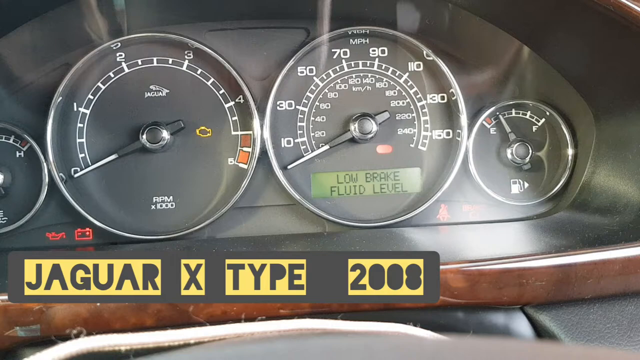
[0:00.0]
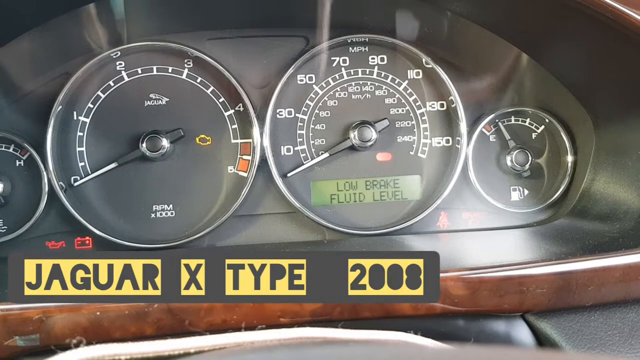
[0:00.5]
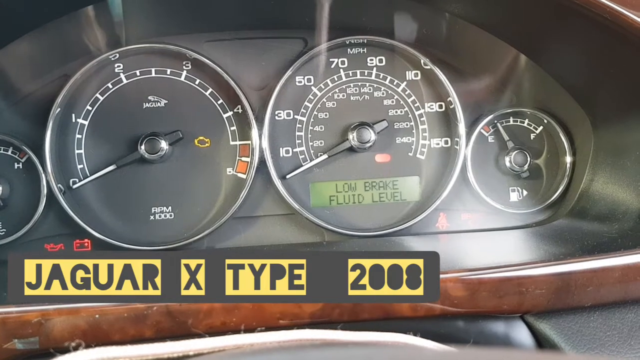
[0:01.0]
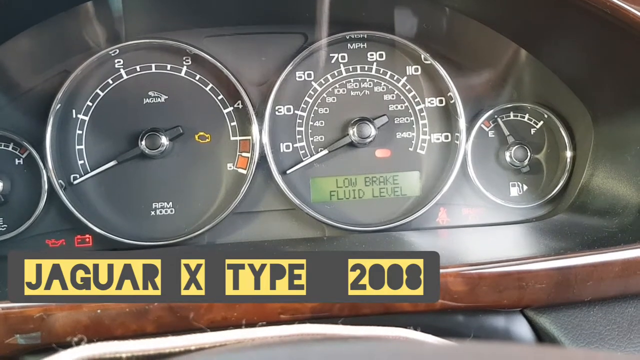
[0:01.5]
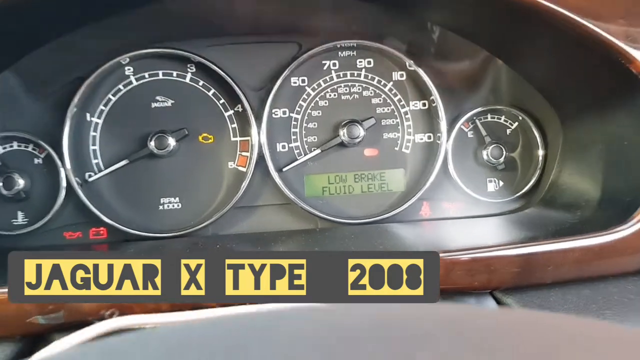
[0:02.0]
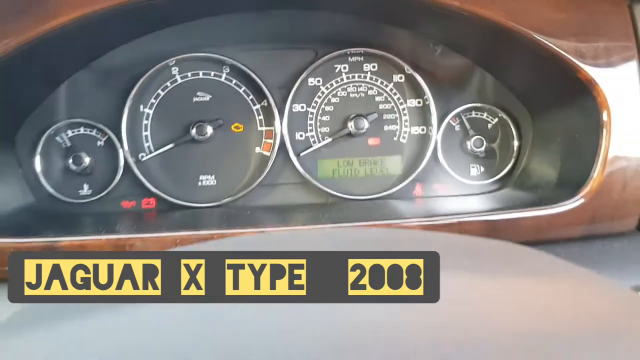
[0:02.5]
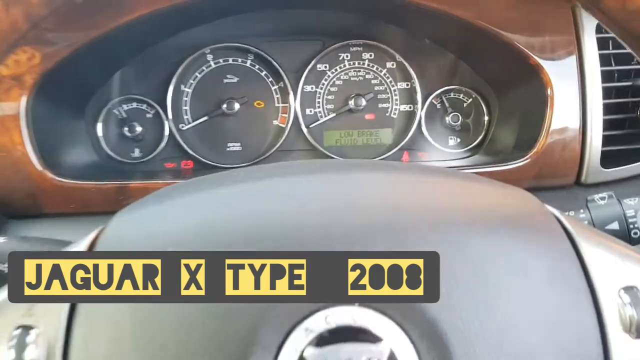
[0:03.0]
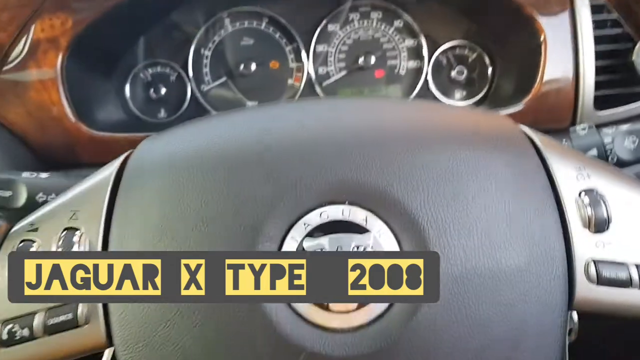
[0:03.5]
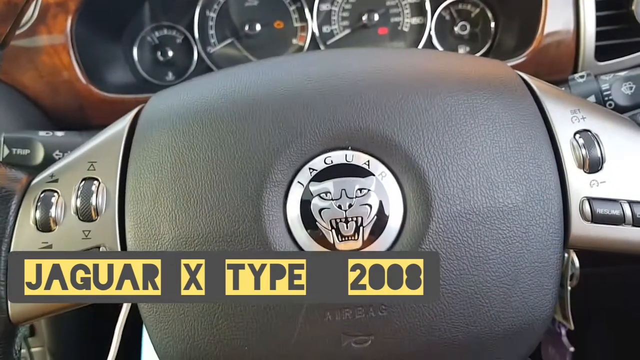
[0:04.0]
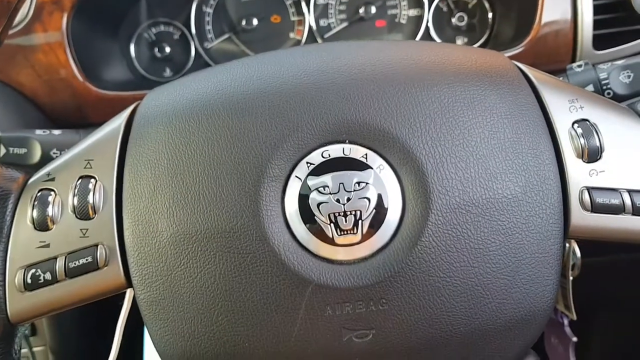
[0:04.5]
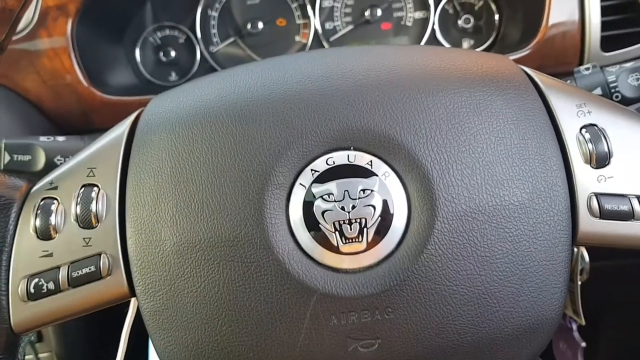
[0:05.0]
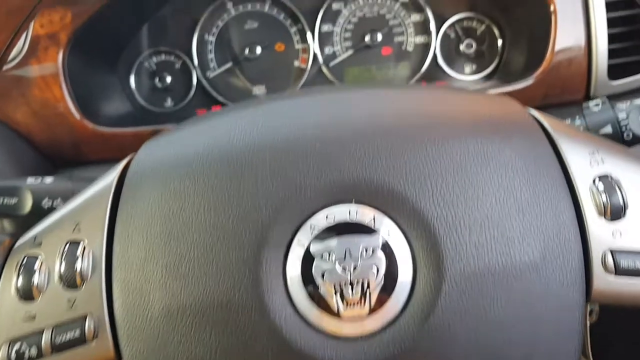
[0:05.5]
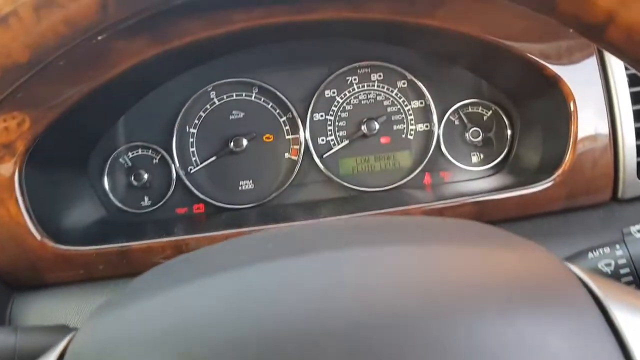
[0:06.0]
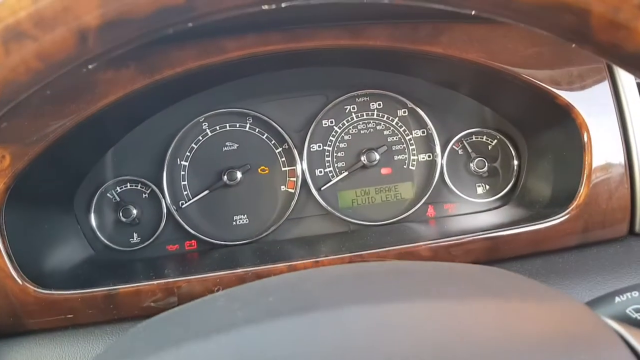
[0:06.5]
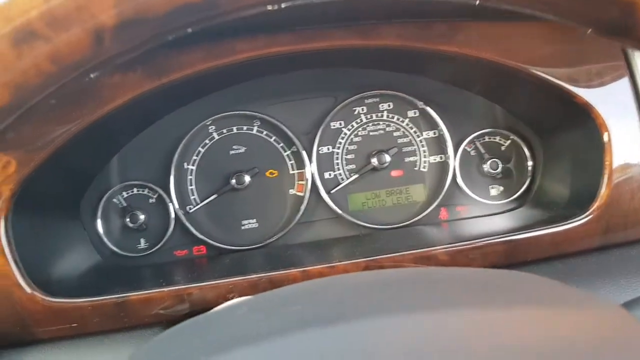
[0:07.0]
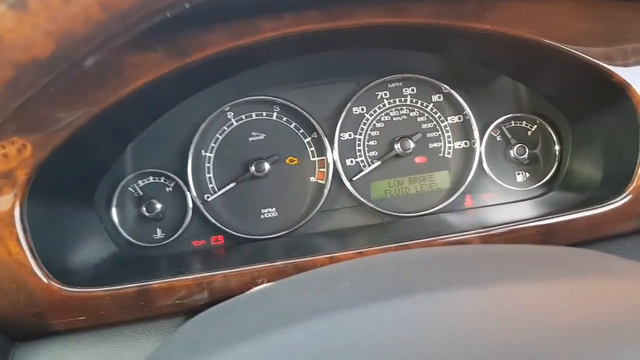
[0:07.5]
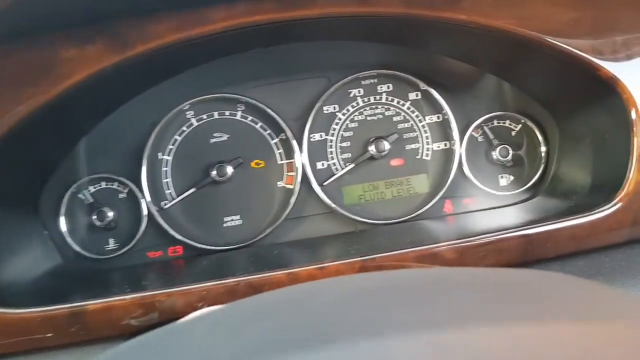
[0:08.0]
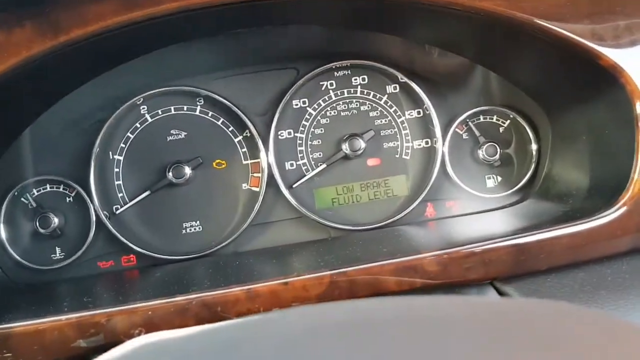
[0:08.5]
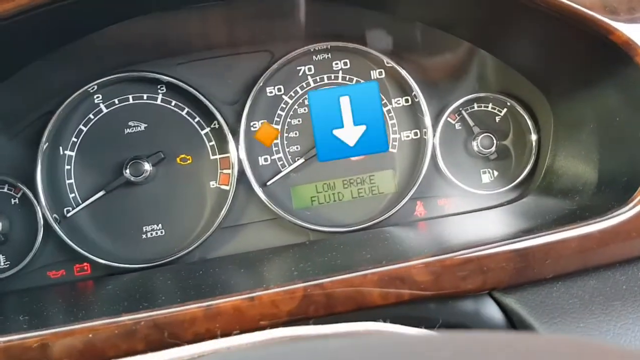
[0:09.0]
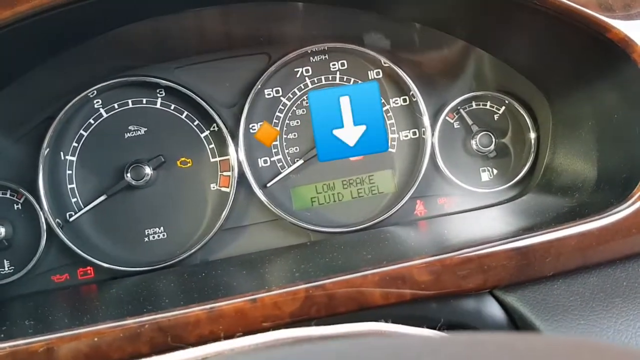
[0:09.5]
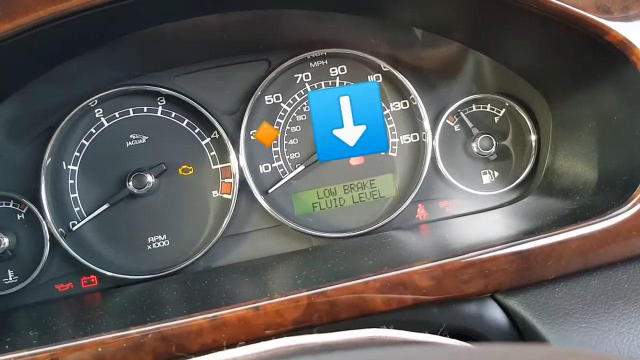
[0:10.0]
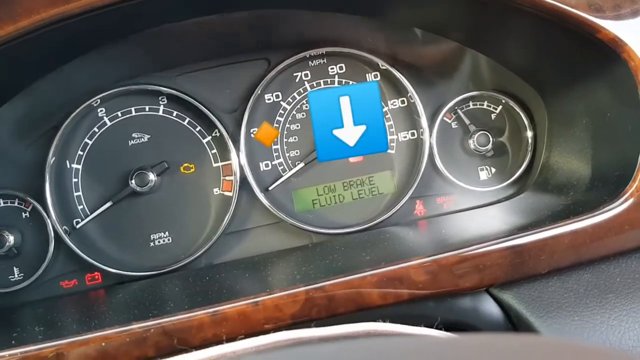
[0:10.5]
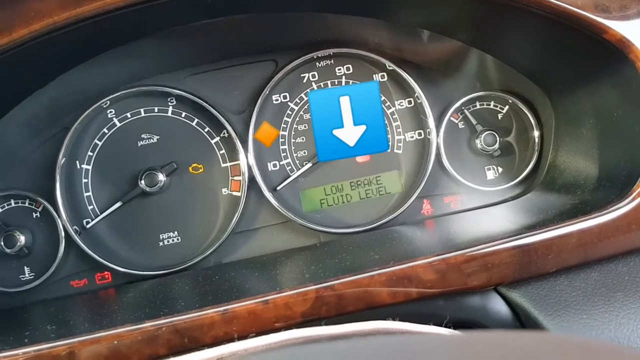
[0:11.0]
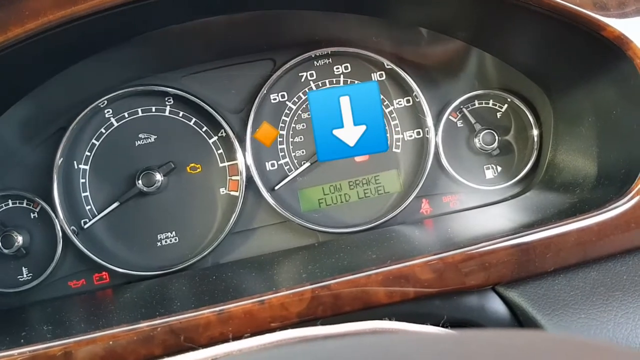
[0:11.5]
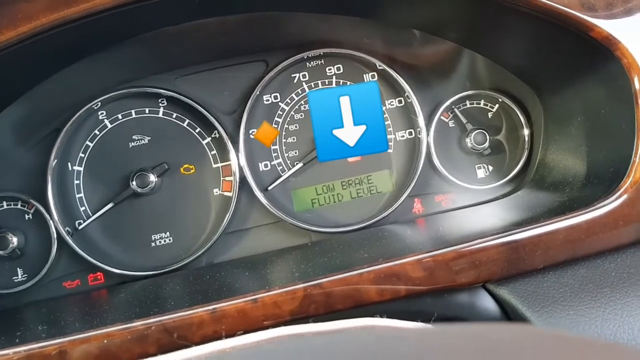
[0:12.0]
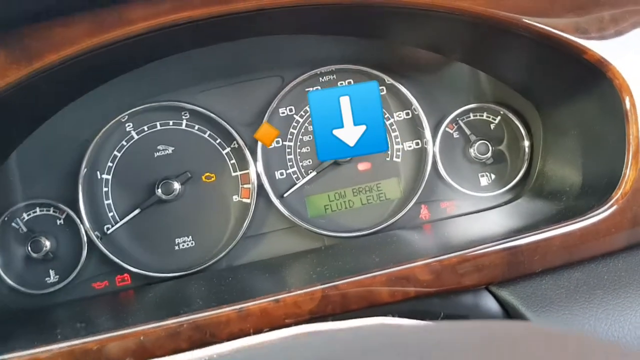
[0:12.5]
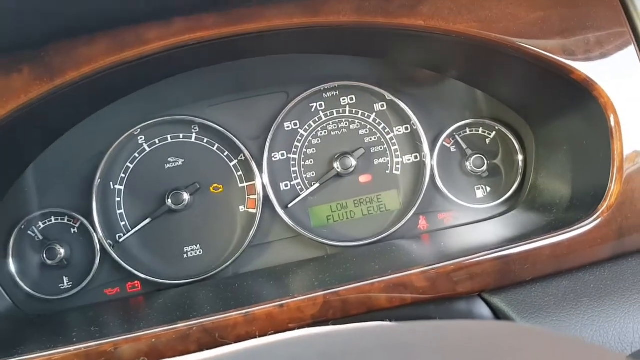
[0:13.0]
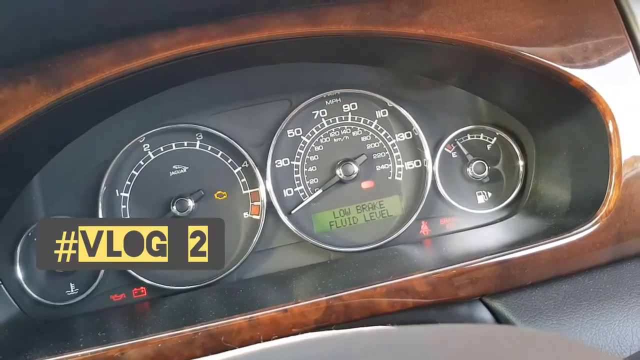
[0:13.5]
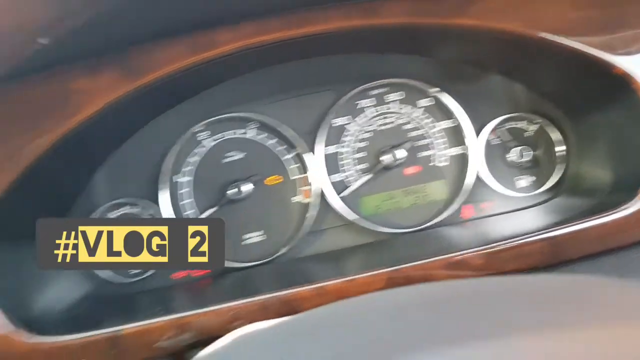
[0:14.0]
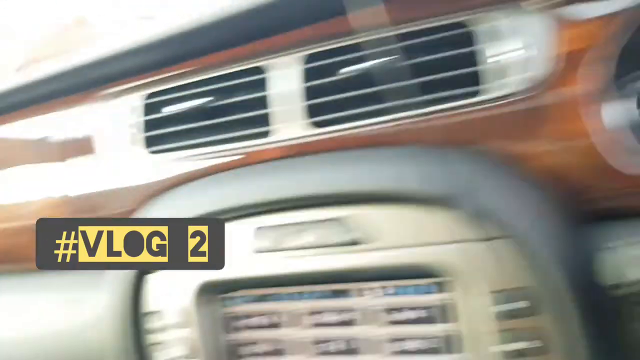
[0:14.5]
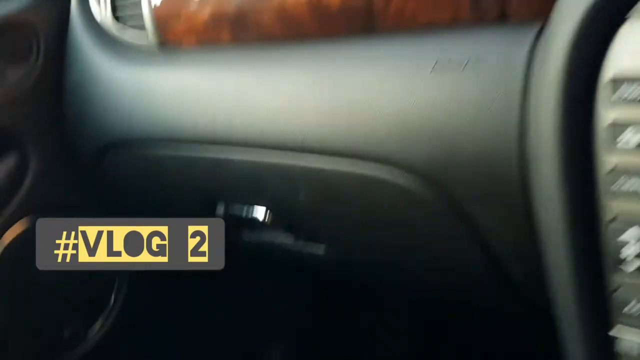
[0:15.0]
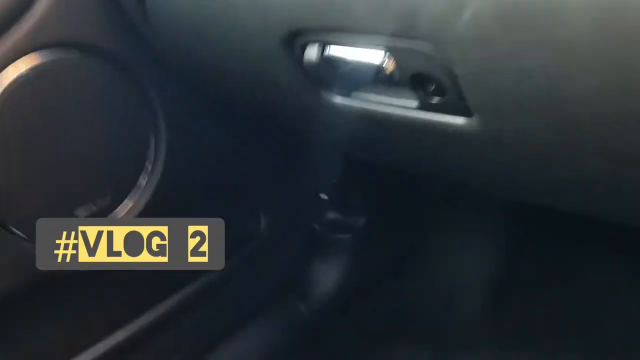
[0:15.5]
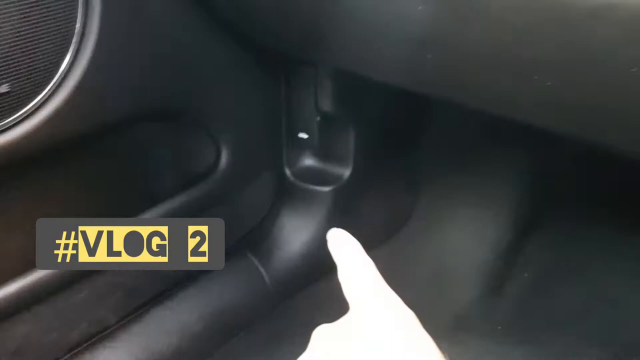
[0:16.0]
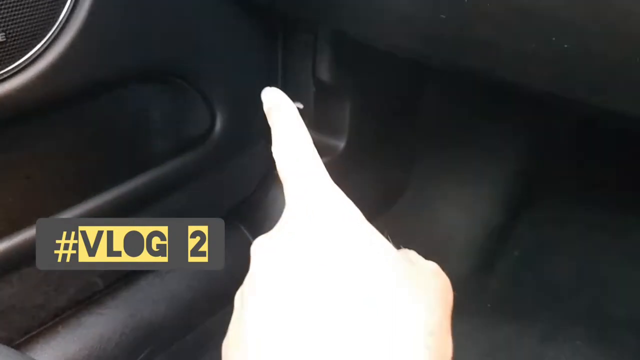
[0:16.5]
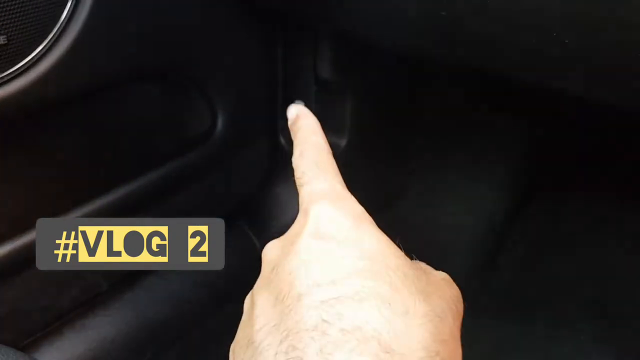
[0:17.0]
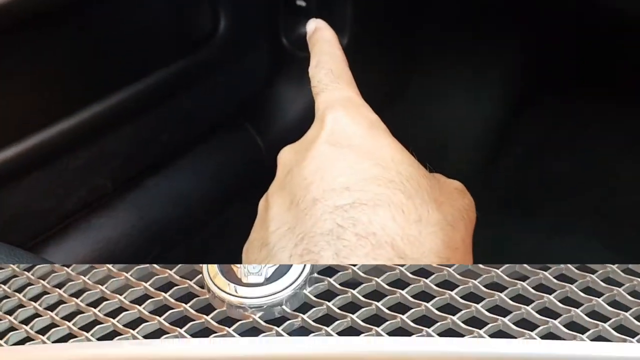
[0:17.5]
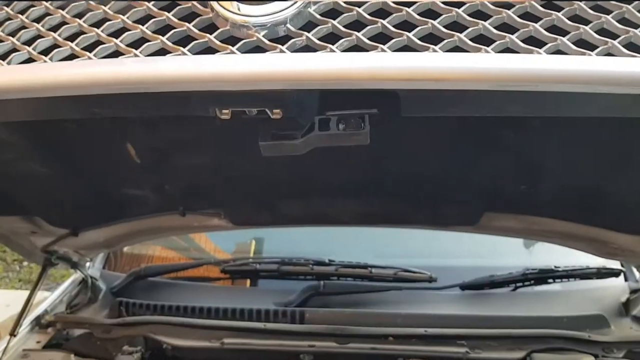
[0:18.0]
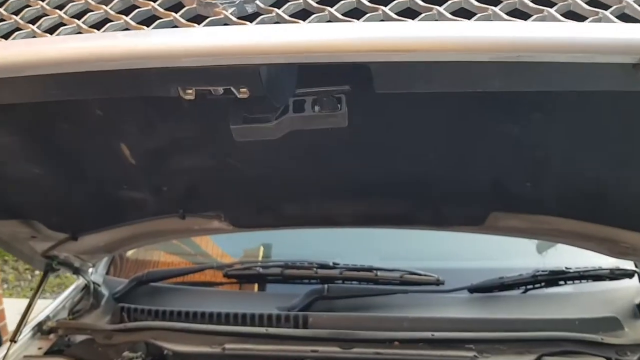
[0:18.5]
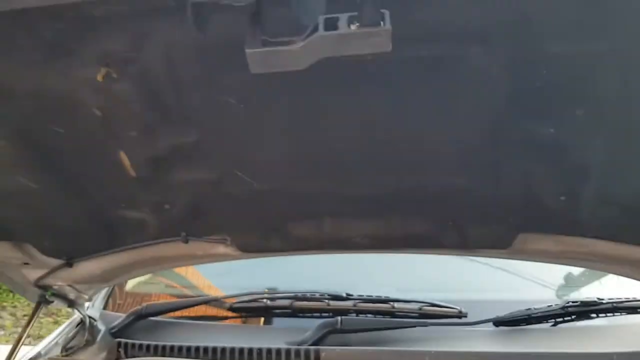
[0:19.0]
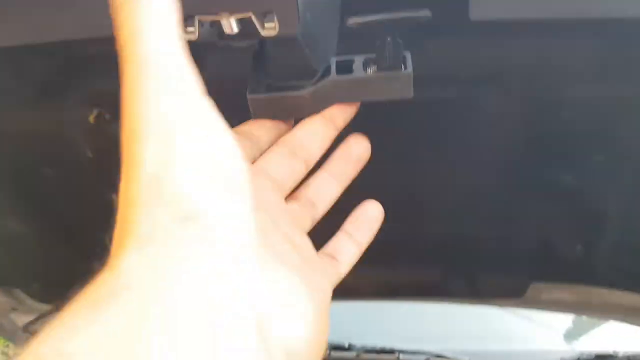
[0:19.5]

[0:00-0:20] The video opens on the dashboard of a car, showing the speedometer, gas gauge and other controls. The words "Jaguar X-Type 2008" appear as the camera zooms out to show the steering wheel with the Jaguar logo. There is a wood grain area around the instrument panel, and the instruments are analog rather than digital. A blue box pops up containing a downward-pointing white arrow, with an orange triangle to its left, and the words "#VLOG2" pop up on the bottom left as the camera pans left toward the floor. A person's hand comes up and points with the index finger. In a different scene, the person's hand comes up and touches a different part of the vehicle.